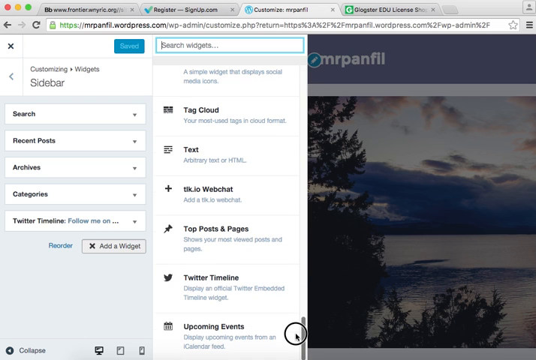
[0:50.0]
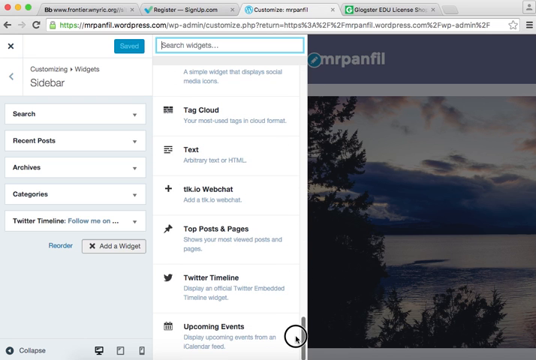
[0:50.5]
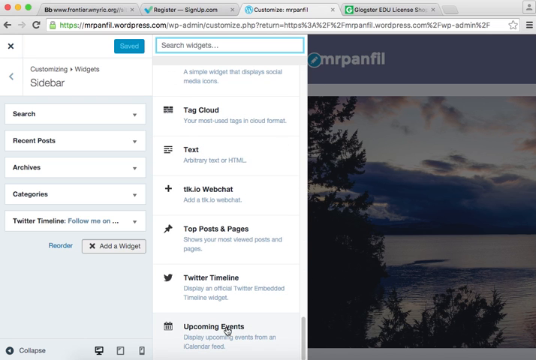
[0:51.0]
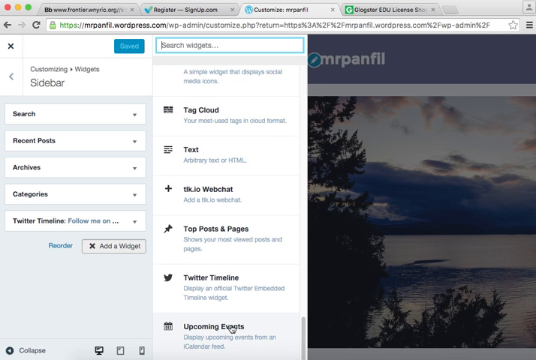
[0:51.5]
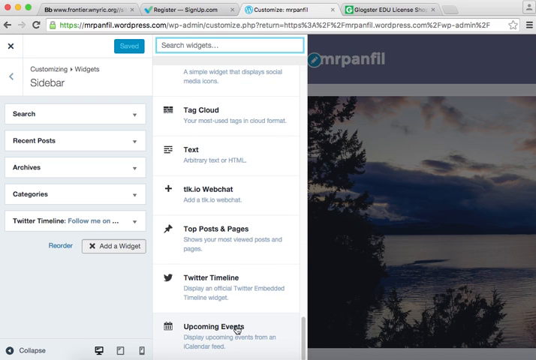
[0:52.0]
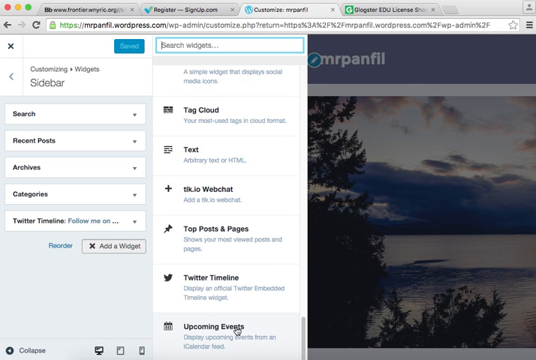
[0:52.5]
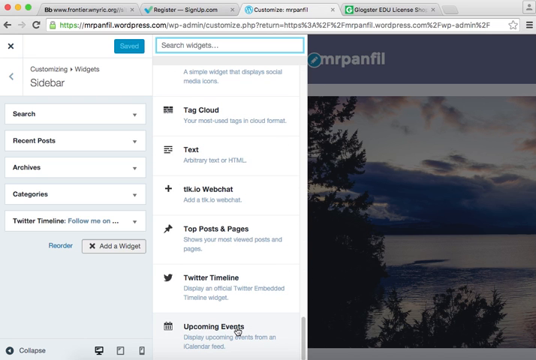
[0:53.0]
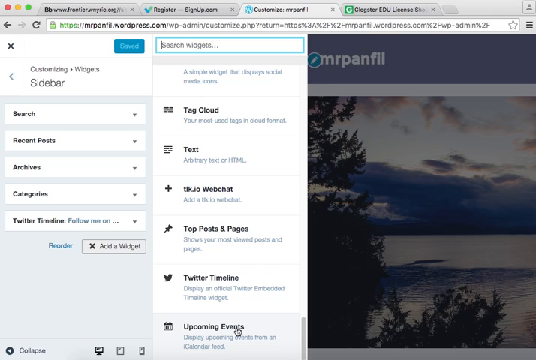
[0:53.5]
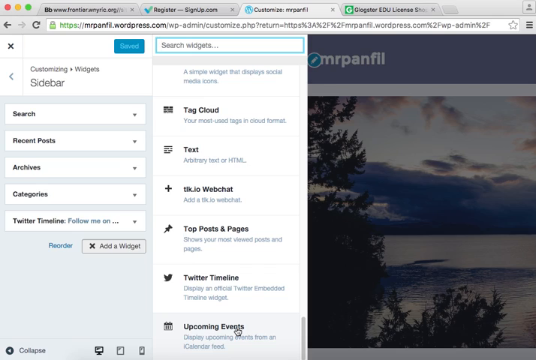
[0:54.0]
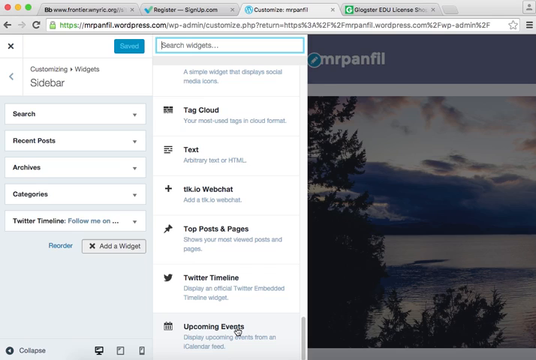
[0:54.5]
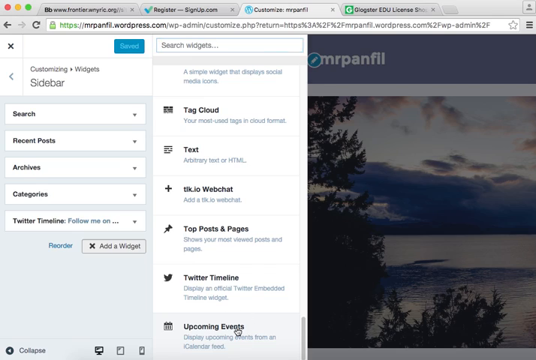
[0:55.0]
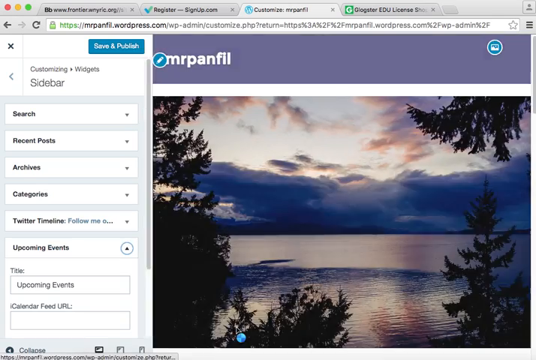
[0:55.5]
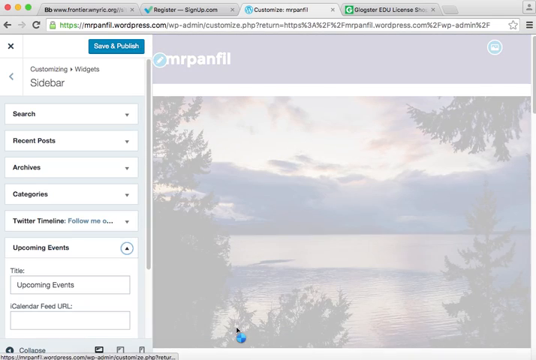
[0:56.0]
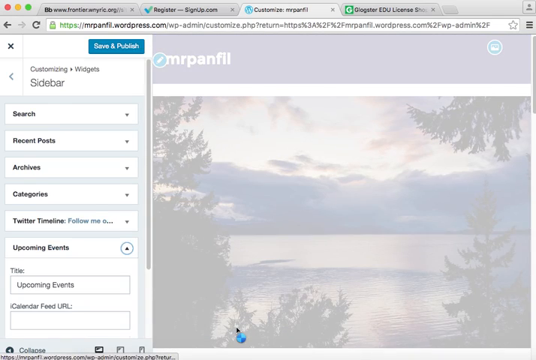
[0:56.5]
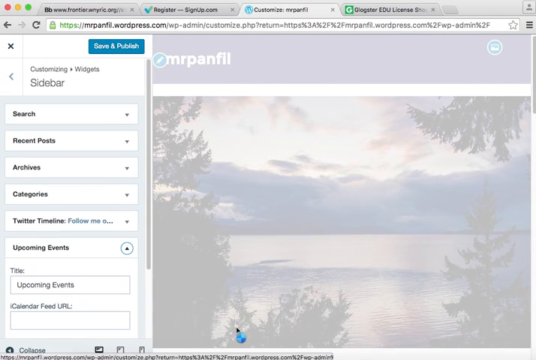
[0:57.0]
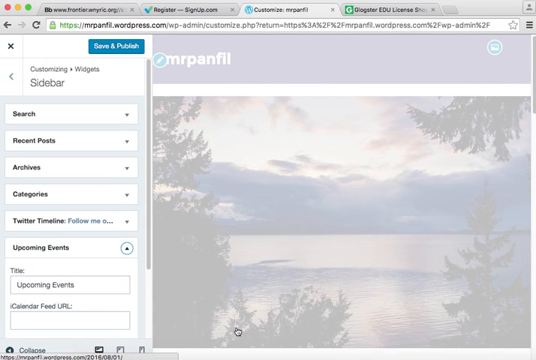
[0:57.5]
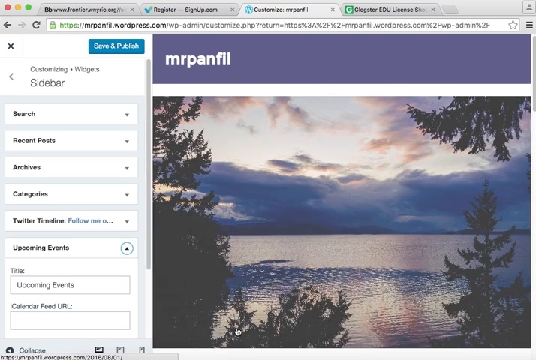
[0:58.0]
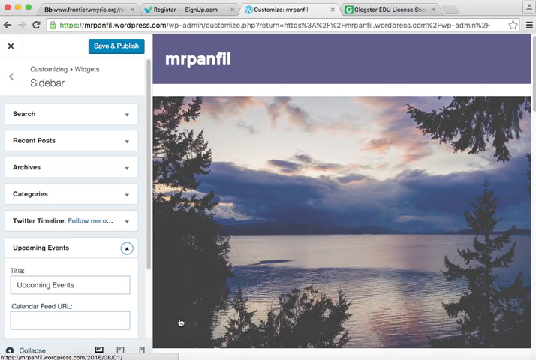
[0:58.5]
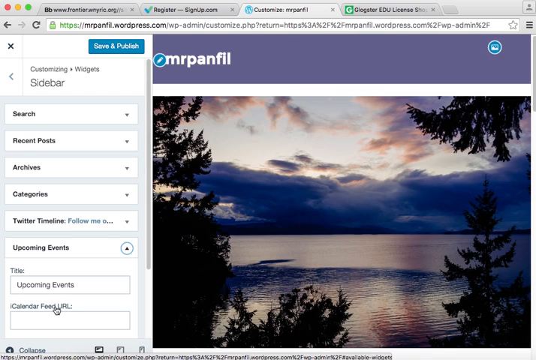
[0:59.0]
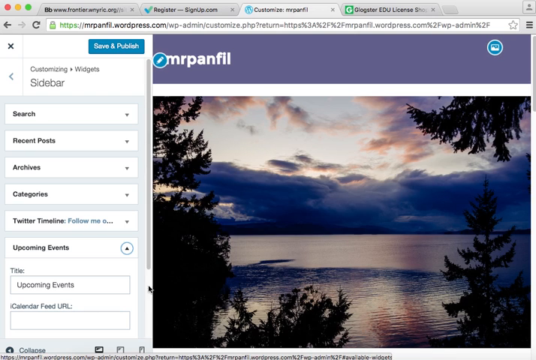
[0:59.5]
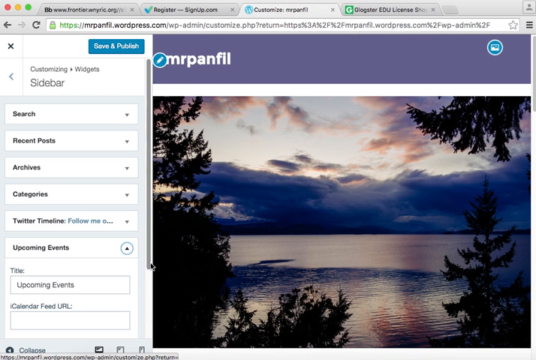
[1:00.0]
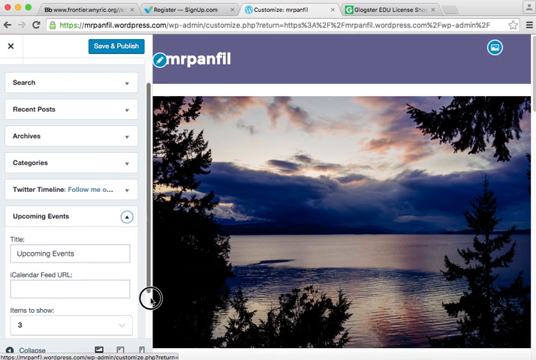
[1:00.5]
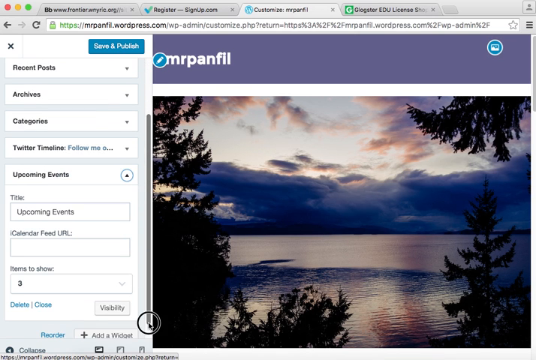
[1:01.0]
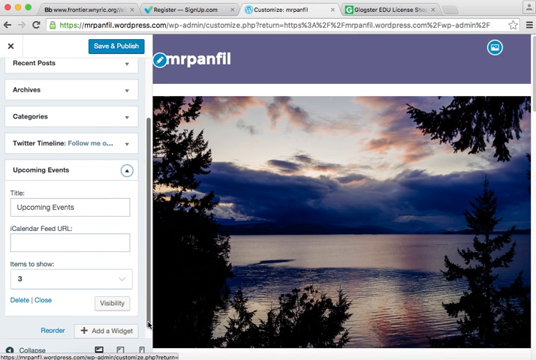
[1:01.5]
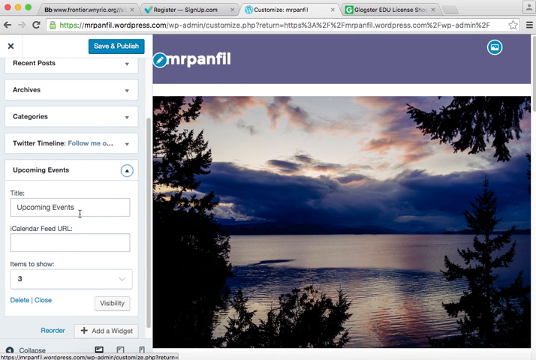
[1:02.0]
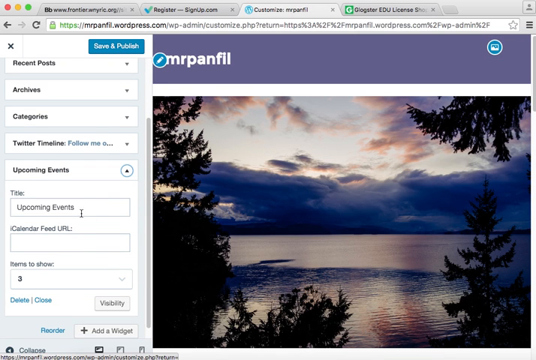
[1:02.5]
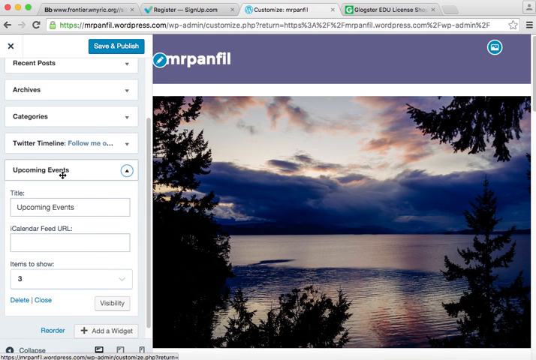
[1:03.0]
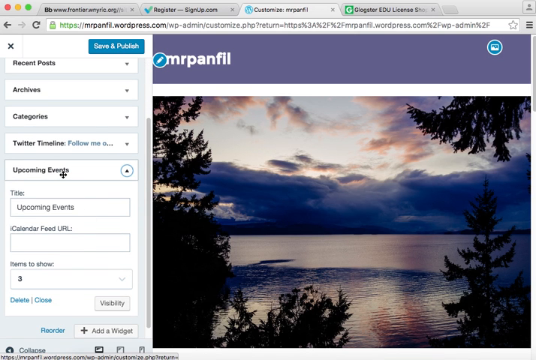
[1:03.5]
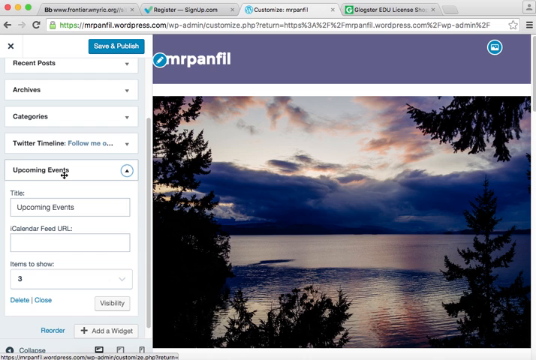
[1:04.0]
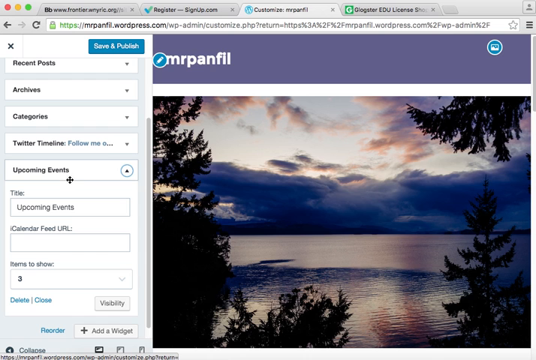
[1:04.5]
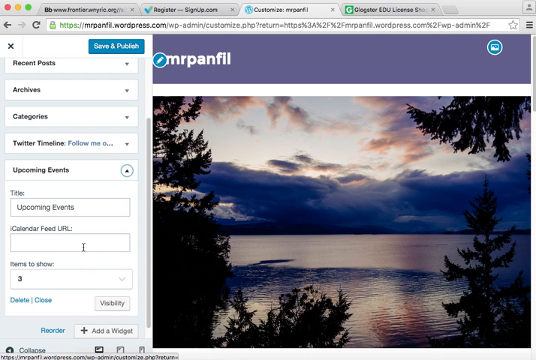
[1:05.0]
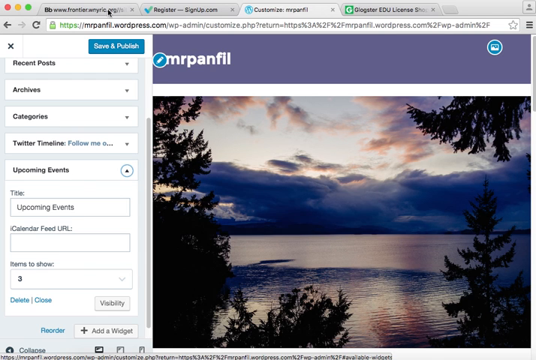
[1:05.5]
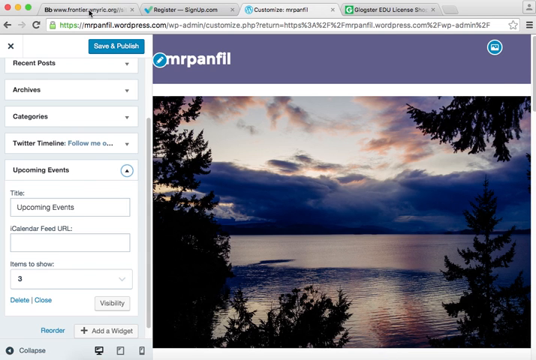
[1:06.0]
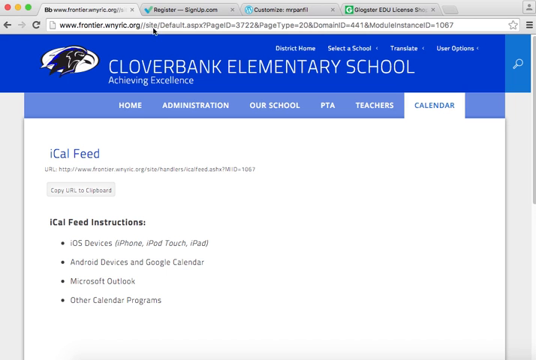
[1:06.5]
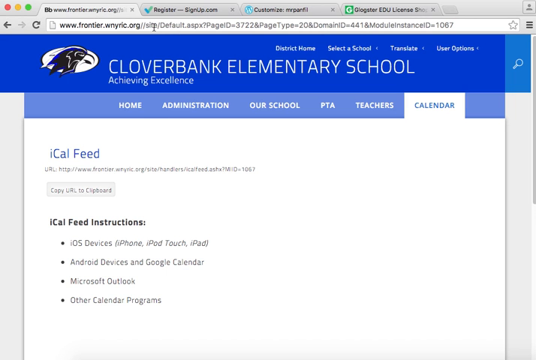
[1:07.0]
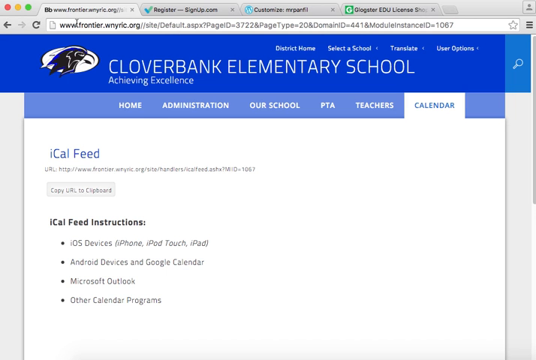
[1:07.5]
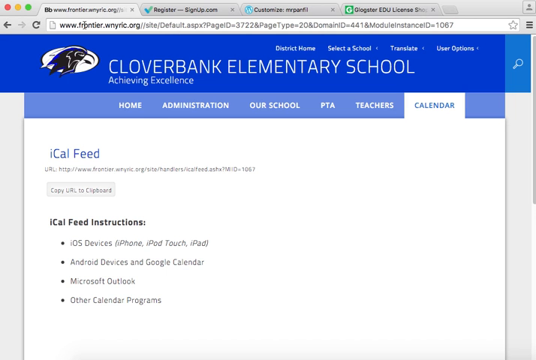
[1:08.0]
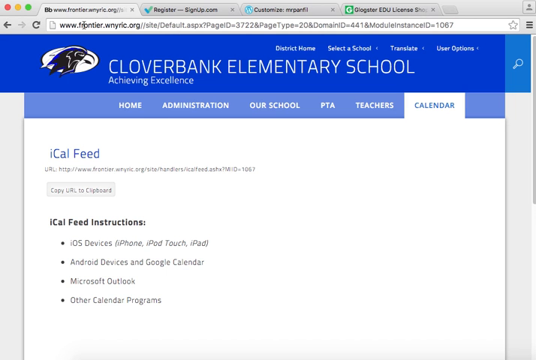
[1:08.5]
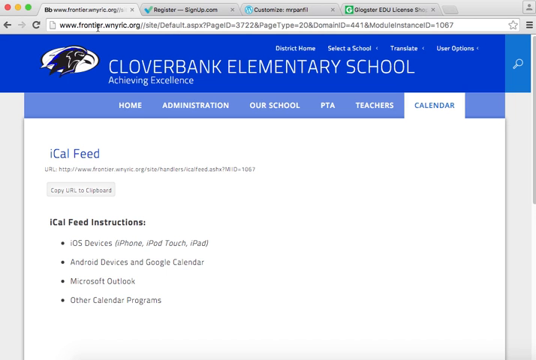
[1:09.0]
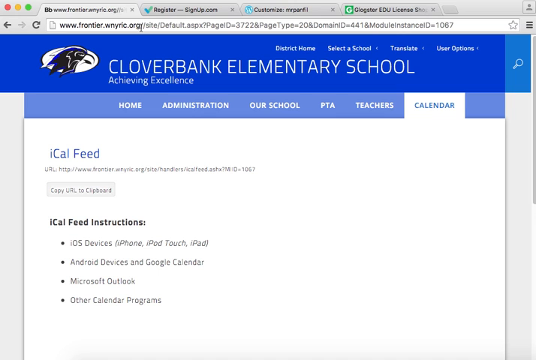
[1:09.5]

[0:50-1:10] The user, working on a WordPress web page in Widgets, scrolls down and clicks on Upcoming Events at the very bottom. While the page loads, they scroll down the left navigator to Upcoming Events. The widget takes a second to load, and afterward the left navigator tab is still displayed. The user hovers over the Upcoming Events widget for a few seconds without editing or adding anything. They then click on the first tab of the web browser, where the shot ends.